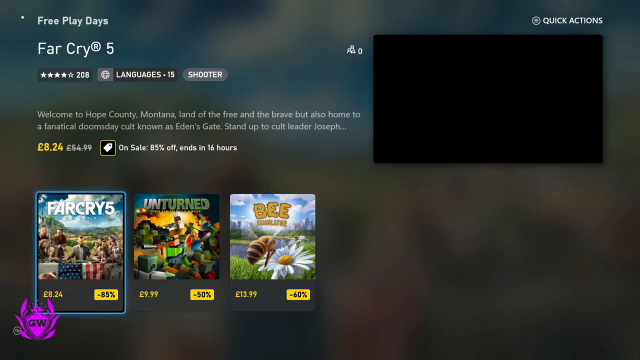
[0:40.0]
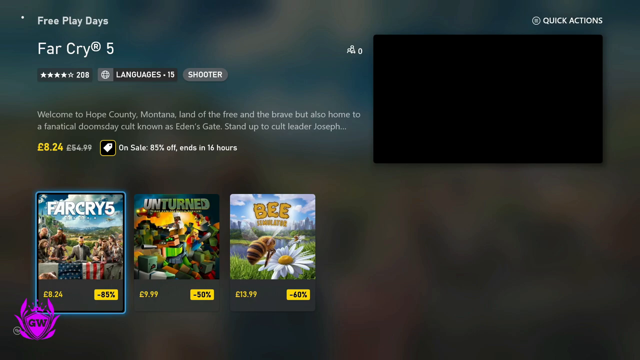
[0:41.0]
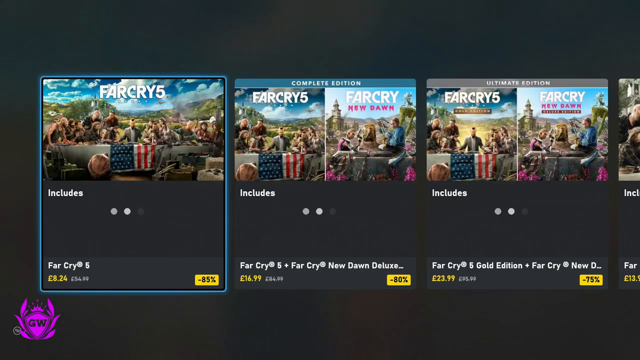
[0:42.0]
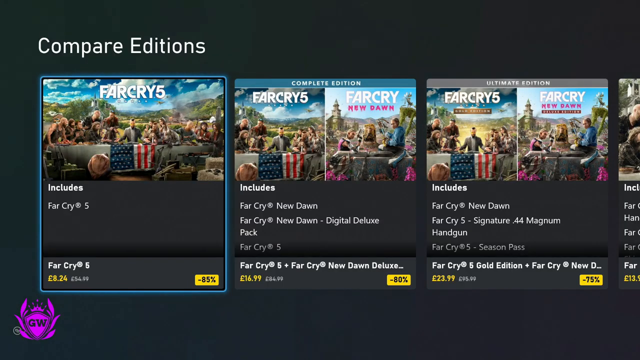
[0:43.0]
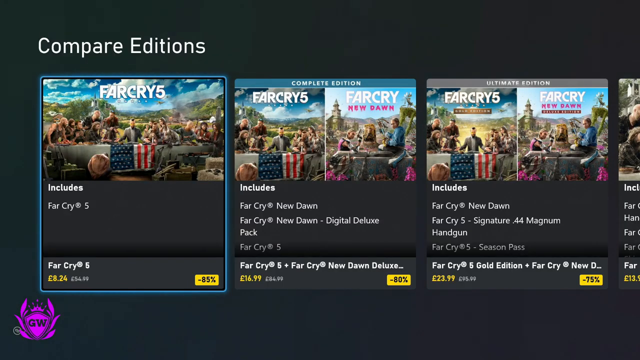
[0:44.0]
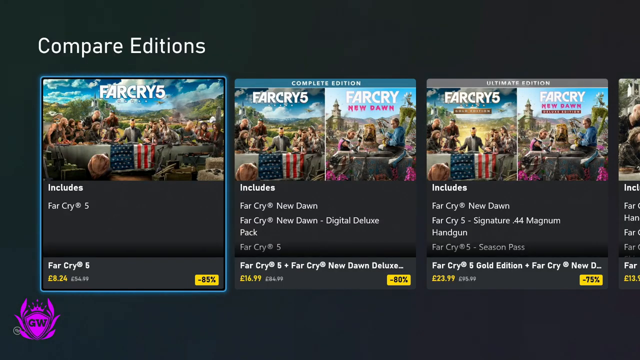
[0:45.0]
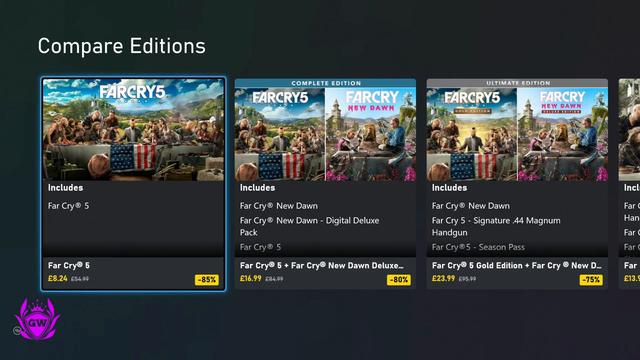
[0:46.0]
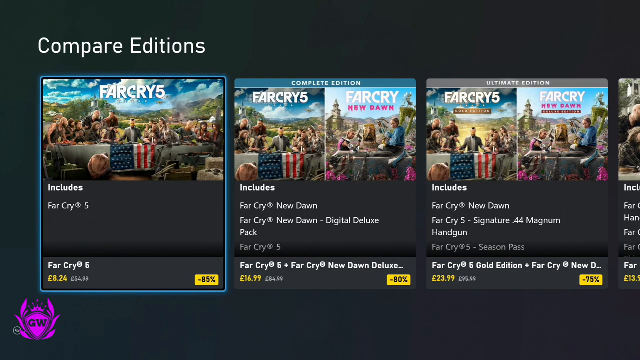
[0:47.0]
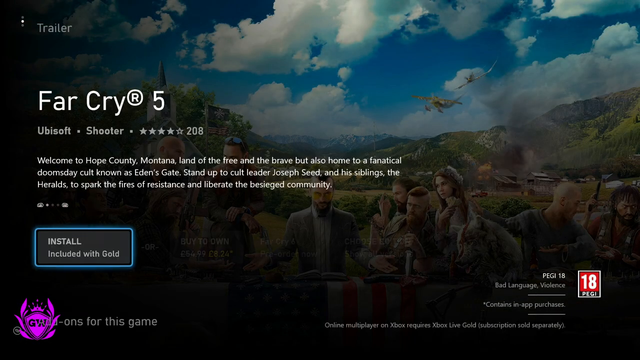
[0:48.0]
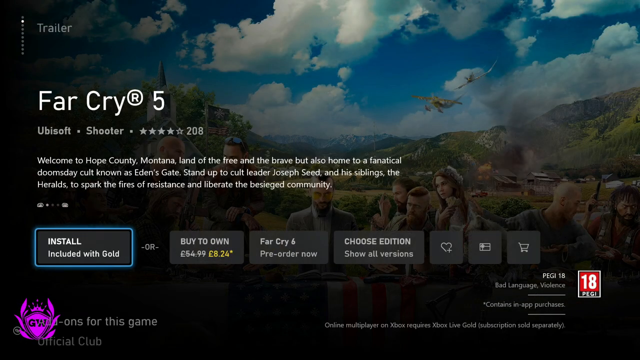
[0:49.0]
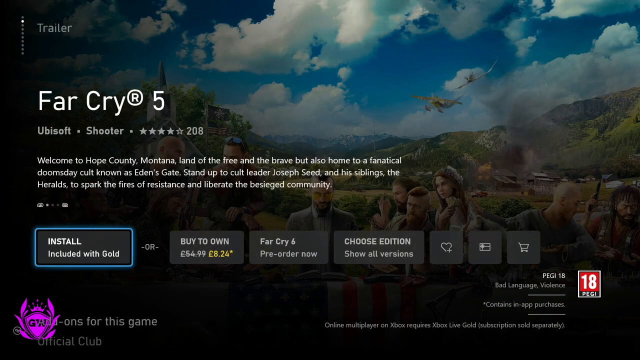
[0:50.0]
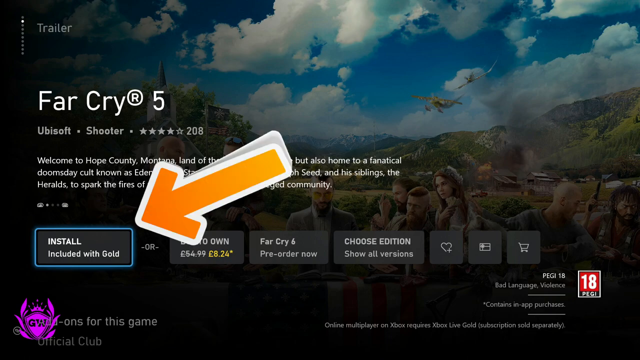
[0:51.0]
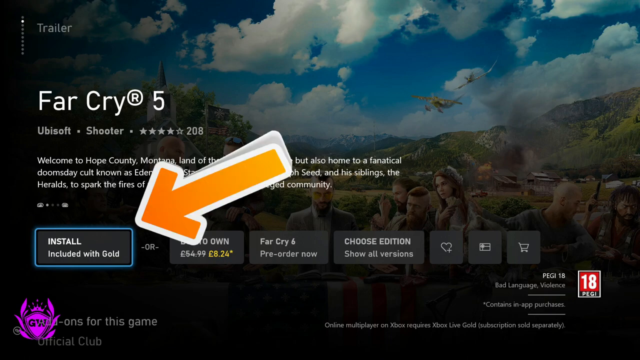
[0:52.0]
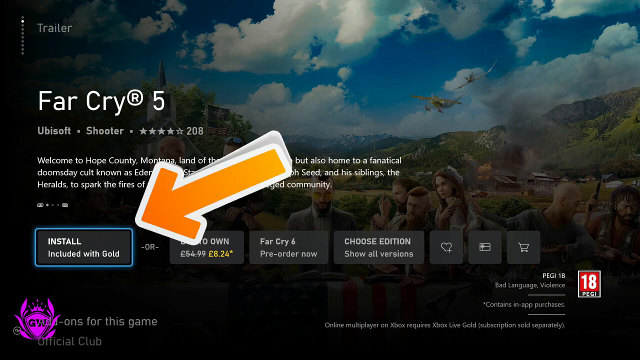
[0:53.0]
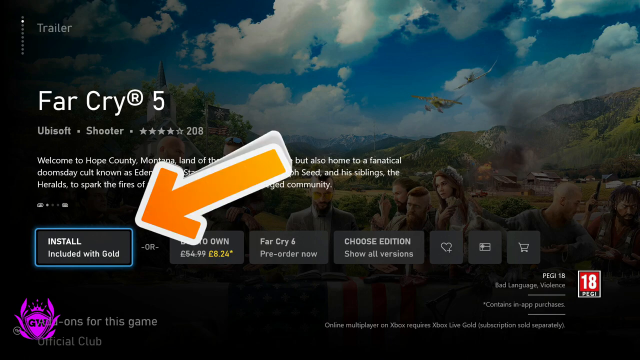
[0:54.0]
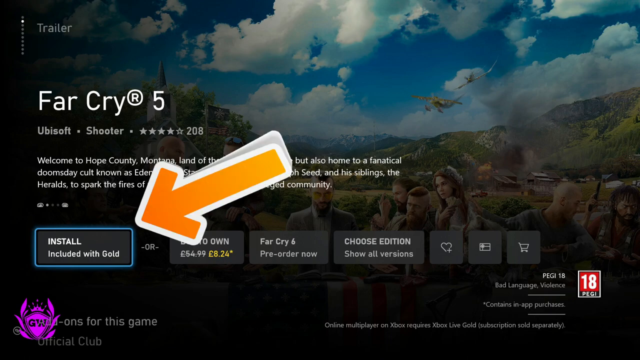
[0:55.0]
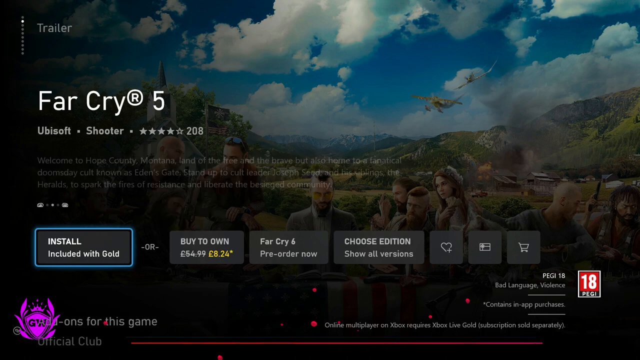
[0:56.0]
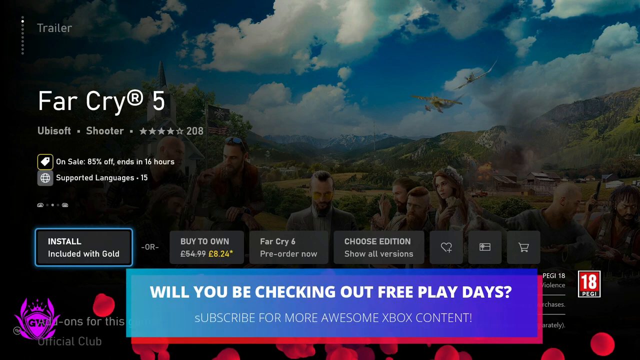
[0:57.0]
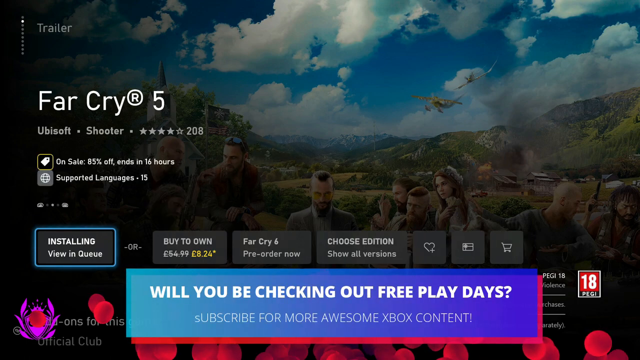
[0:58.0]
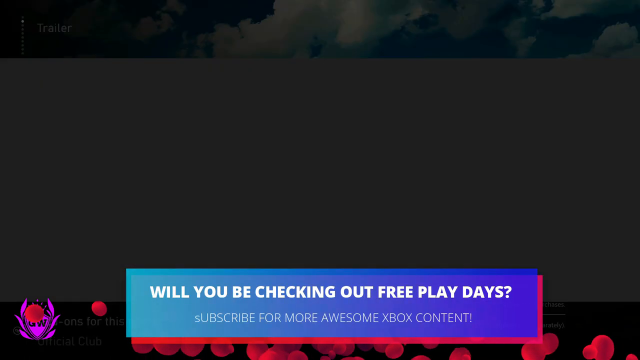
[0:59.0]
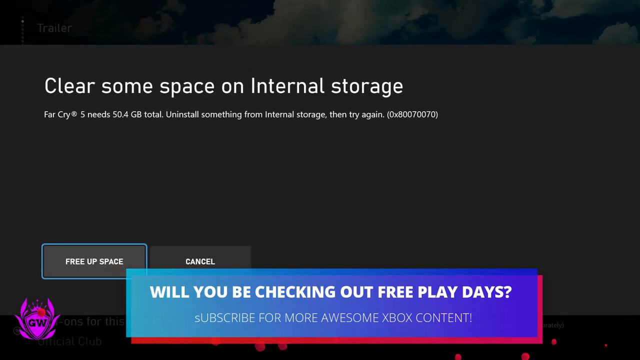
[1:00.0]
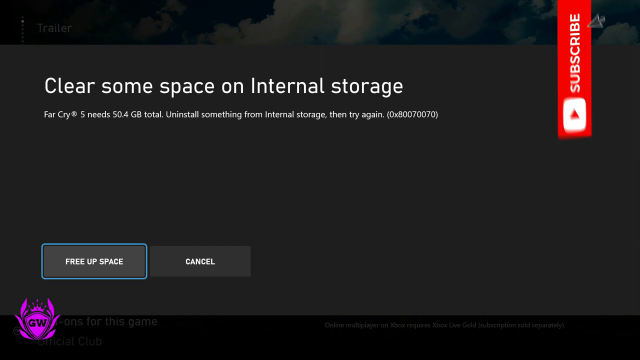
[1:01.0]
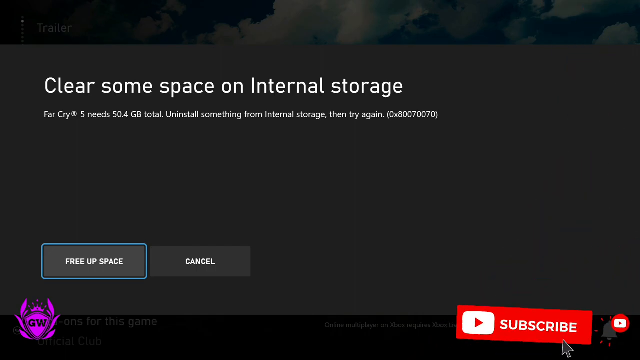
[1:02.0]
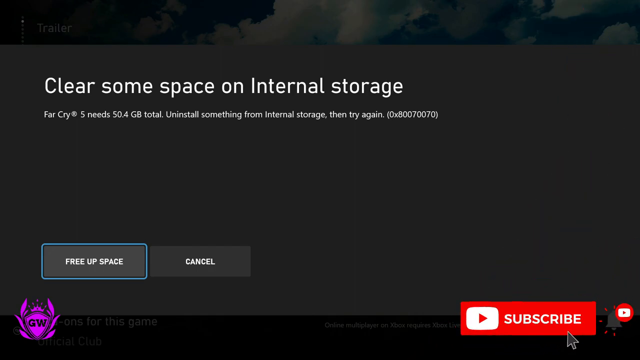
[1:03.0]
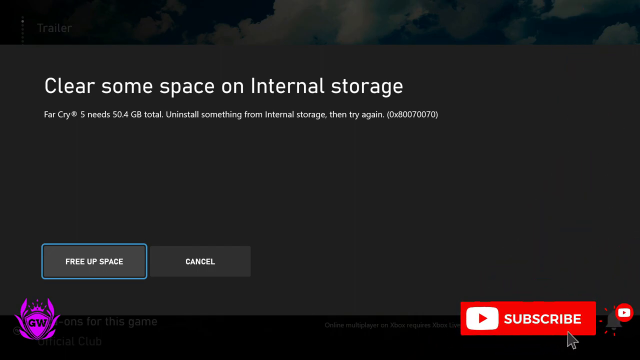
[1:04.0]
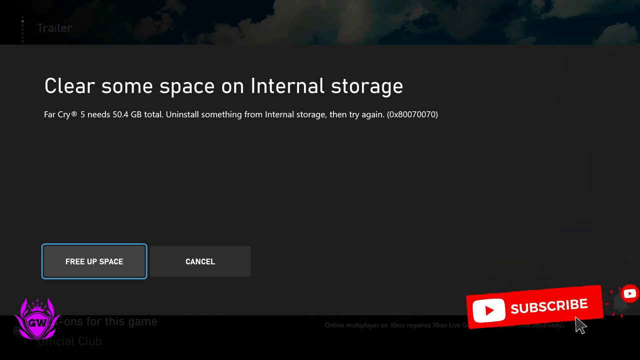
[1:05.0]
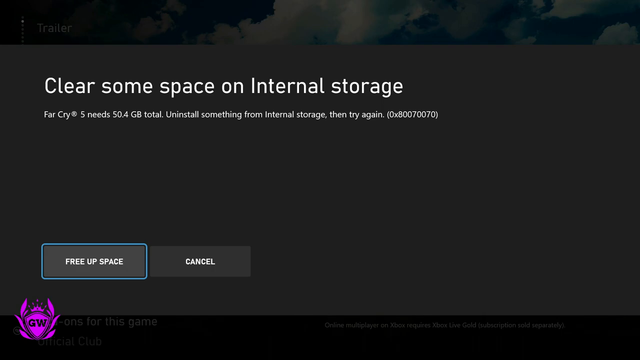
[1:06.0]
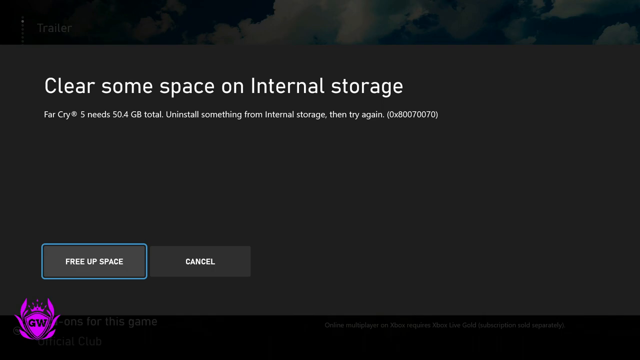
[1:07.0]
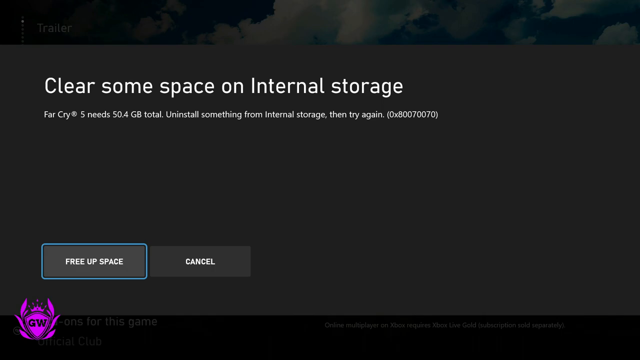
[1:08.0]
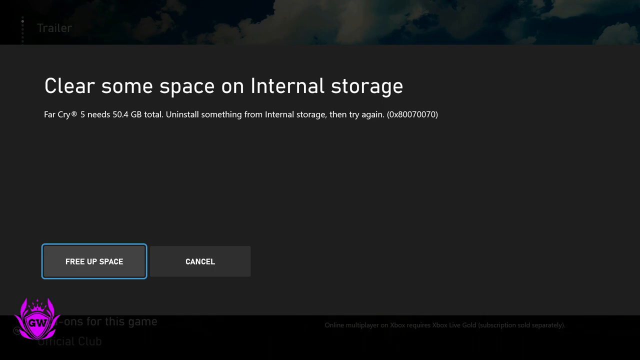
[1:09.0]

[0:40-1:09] A Far Cry 5 section for comparing editions shows at least four pop-up boxes, each containing a different edition. The first edition includes Far Cry 5; the next includes Far Cry New Dawn and is a digital deluxe version, also known as the Complete Edition. The next is the Ultimate Edition, which includes Far Cry New Dawn, the Far Cry 5 Signature .44 Magnum Handgun and the Far Cry 5 Season Pass. The Far Cry 5 Gold Edition is 75% off. Far Cry 5 is then shown with a large yellow arrow pointing at the install button. Next, a message indicates the user needs to clear some space on internal storage, with a pop-up button for "free up space" and one for "cancel"; the free up space button is highlighted. A like and subscribe notification is in the lower right corner.